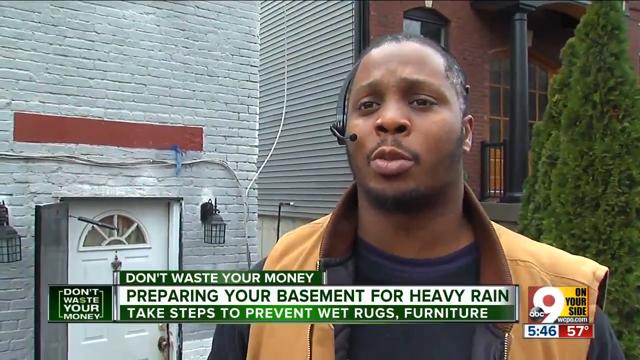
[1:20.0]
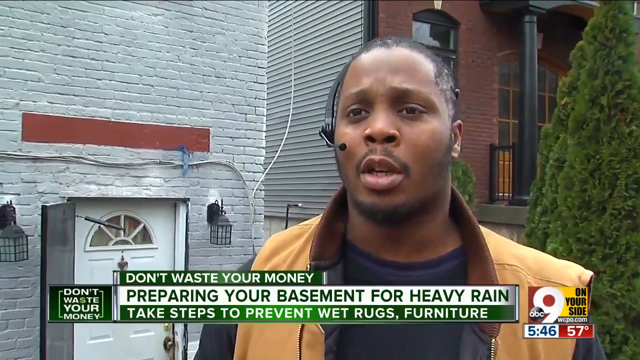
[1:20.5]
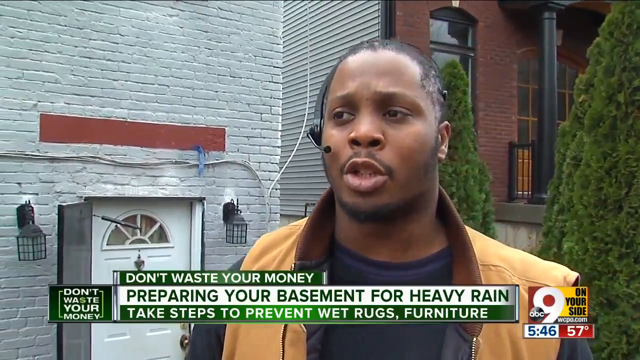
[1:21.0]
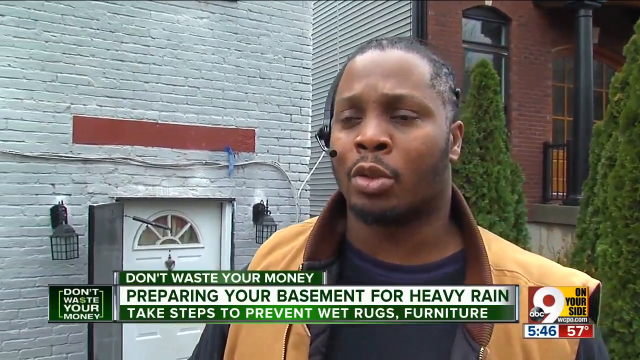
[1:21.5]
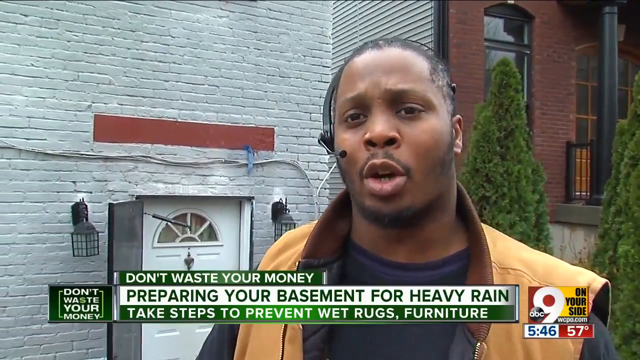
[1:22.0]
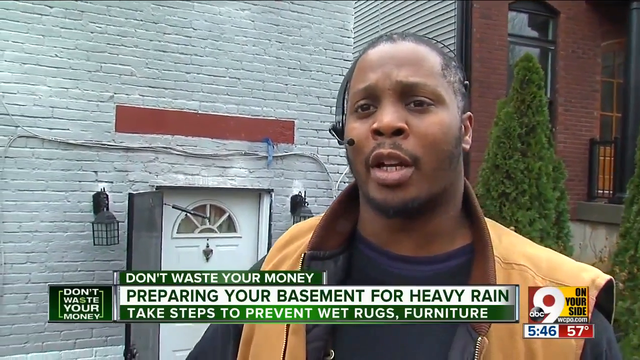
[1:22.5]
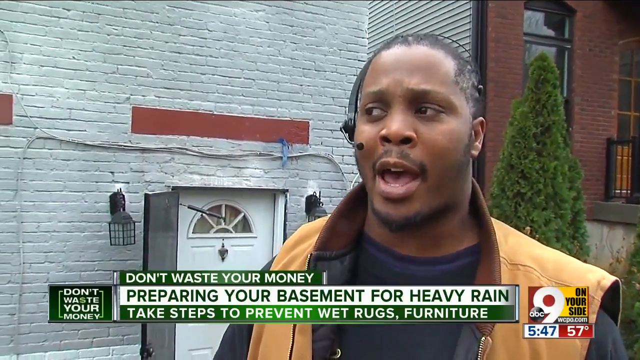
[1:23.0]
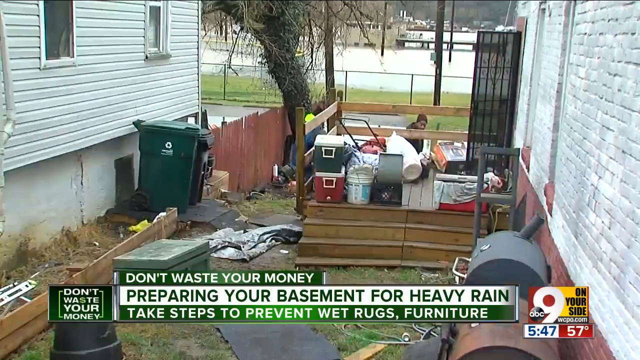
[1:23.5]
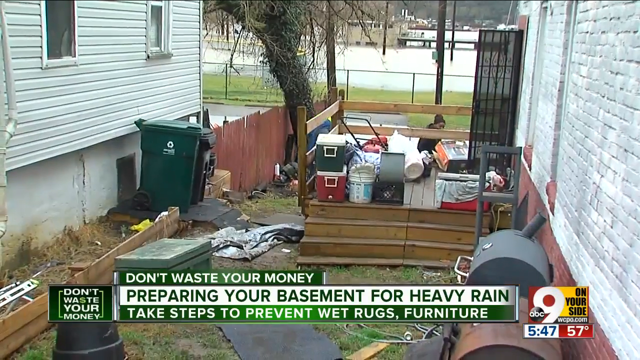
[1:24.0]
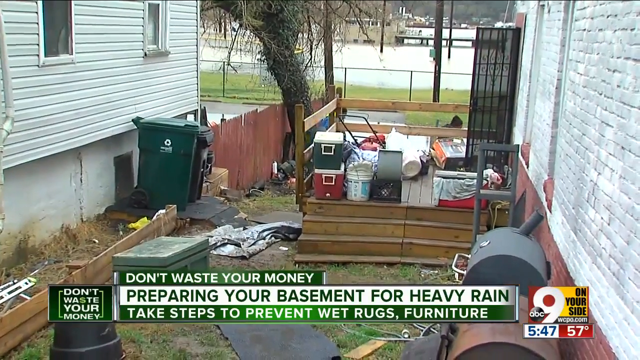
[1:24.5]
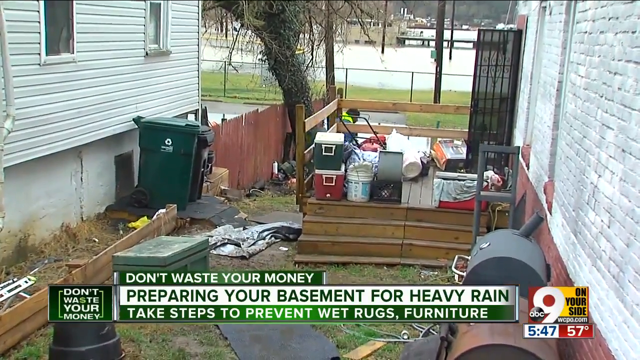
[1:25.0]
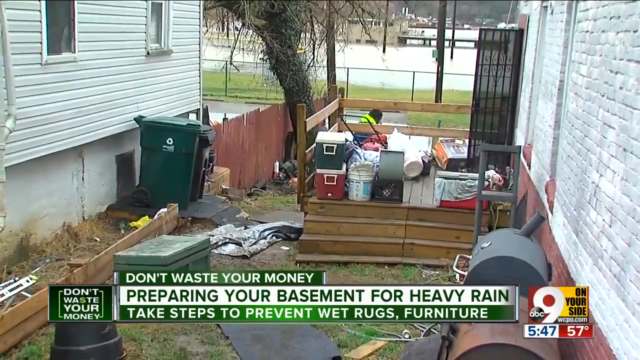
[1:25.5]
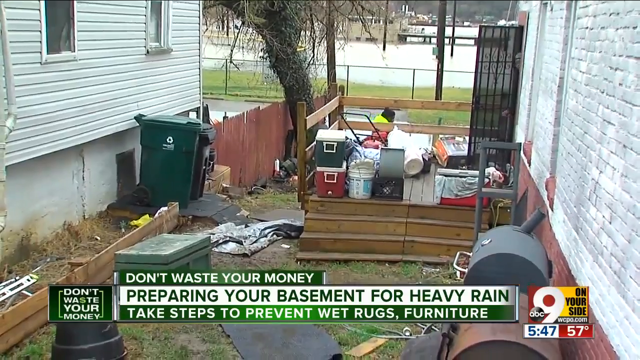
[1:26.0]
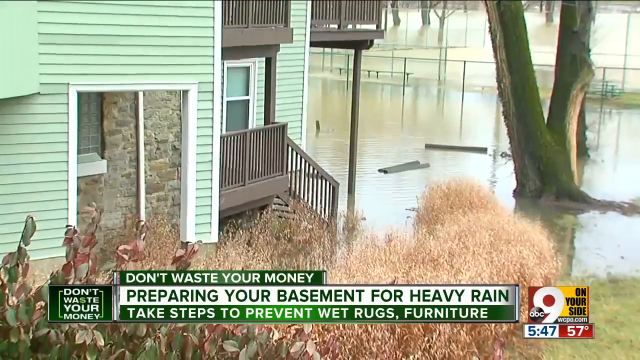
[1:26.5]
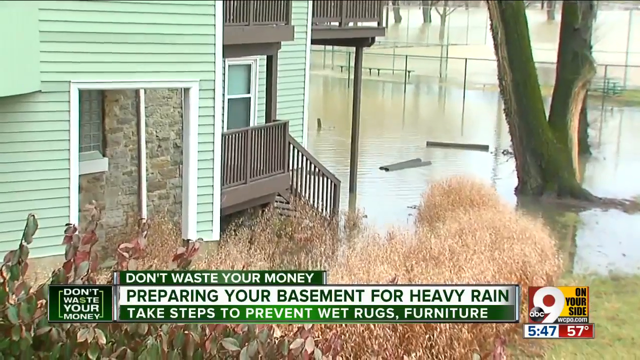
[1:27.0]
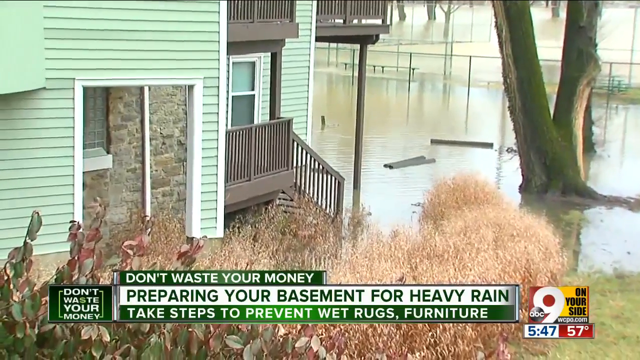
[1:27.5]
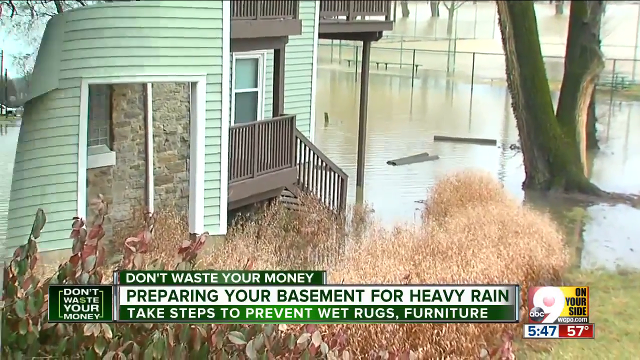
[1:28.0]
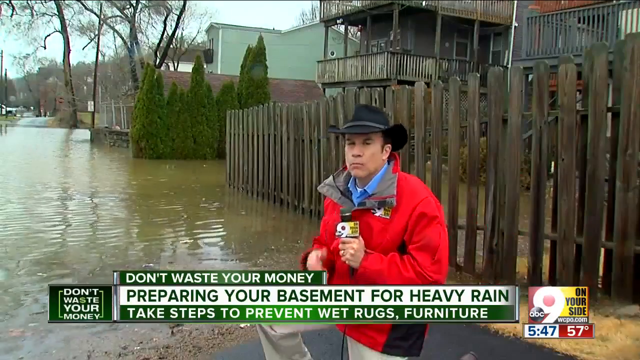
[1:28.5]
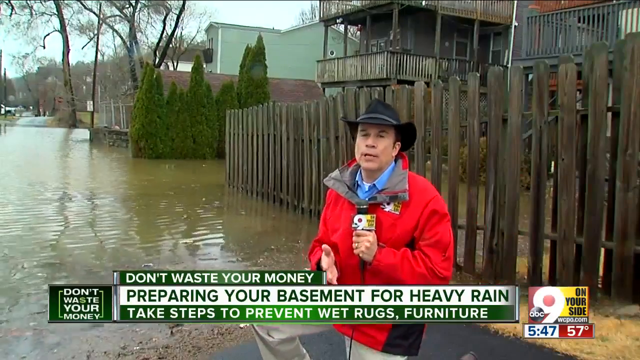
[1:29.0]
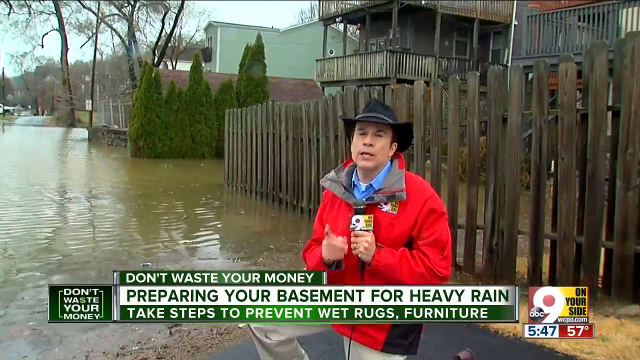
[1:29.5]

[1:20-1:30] The video shows a man who appears to be one of the plumbers or technicians, wearing a headset. The house appears to be the one whose basement was flooded. Things are being unloaded from the basement and placed on the porch, where lots of coolers, buckets, and similar items are stacked all over. The house has an iron security door, and there is a trash bin or recycling bin nearby. The streets are flooded. The video then cuts to a reporter wearing a vest and a black Stetson cowboy hat, standing in two feet of water.